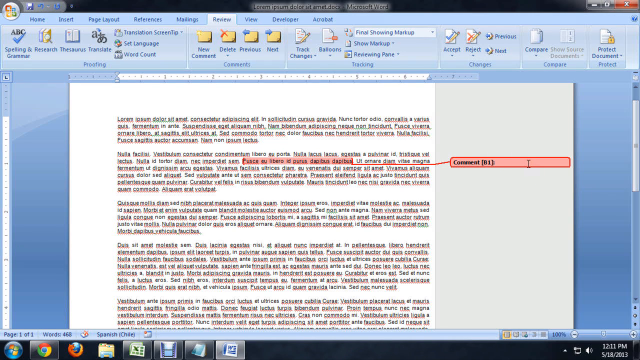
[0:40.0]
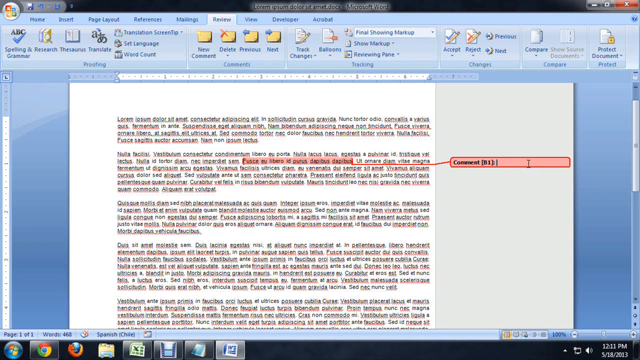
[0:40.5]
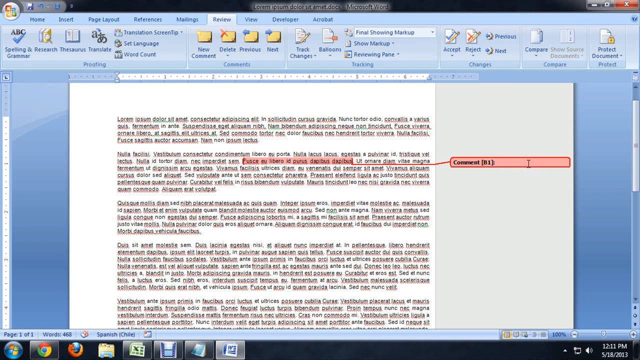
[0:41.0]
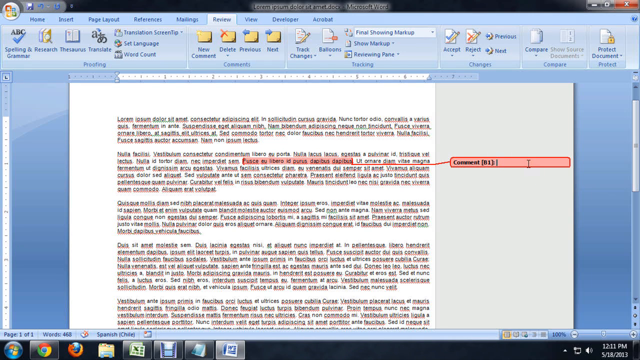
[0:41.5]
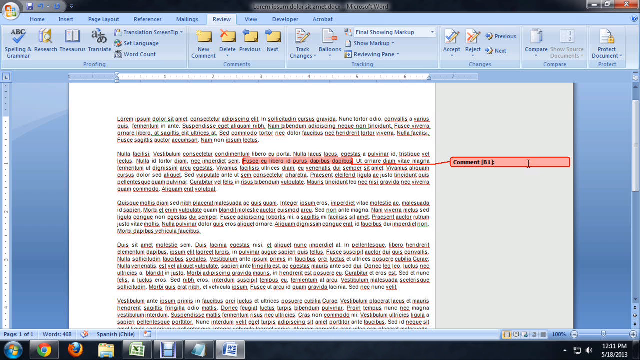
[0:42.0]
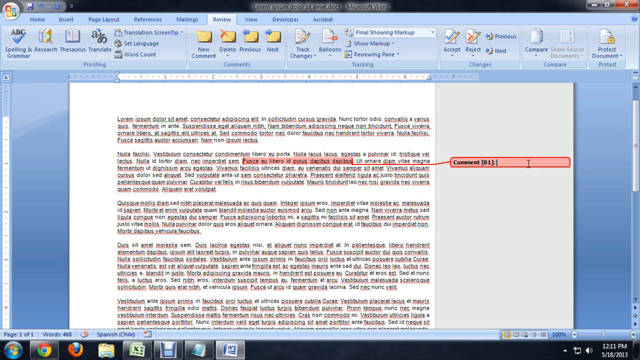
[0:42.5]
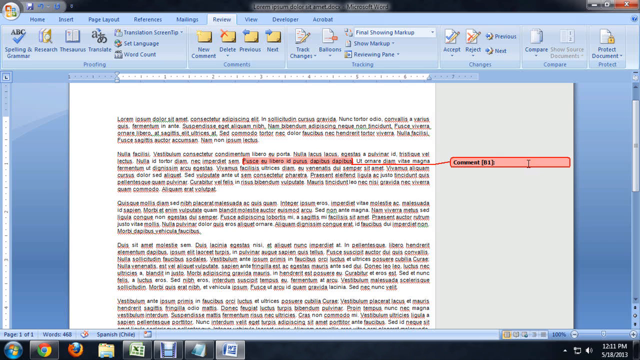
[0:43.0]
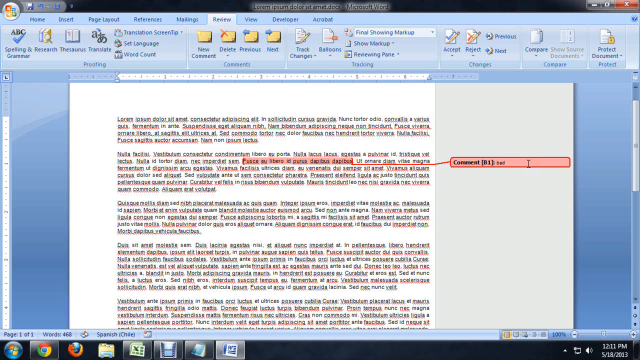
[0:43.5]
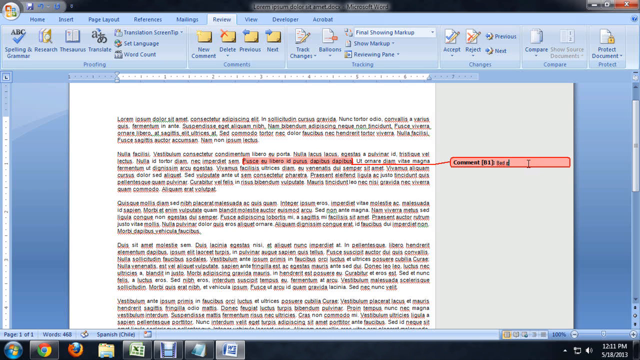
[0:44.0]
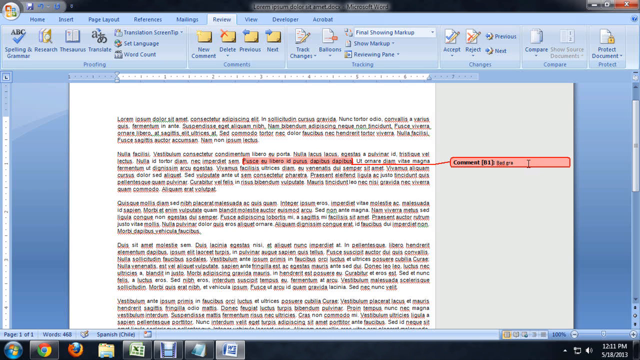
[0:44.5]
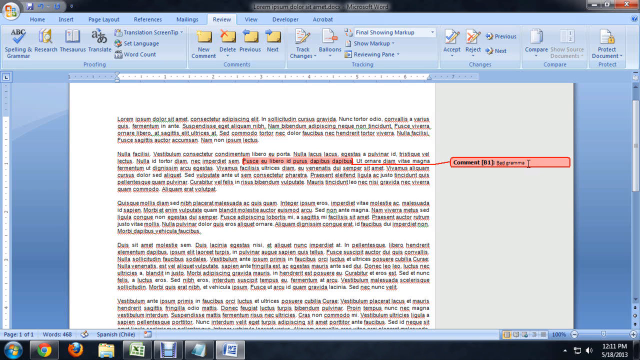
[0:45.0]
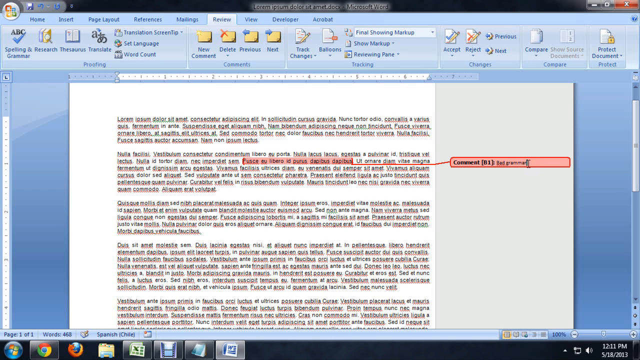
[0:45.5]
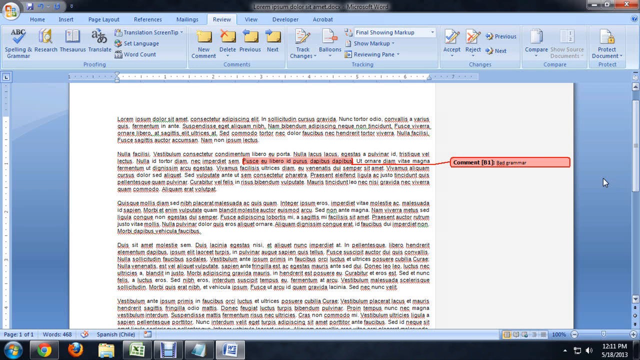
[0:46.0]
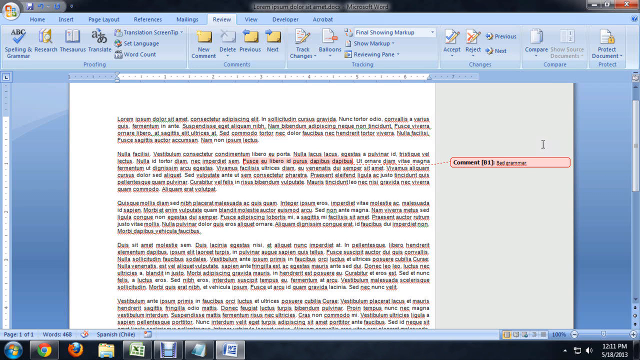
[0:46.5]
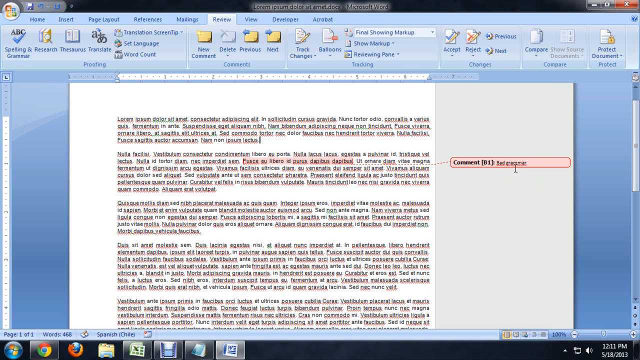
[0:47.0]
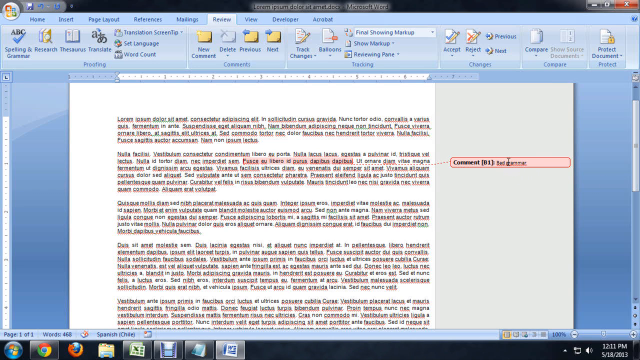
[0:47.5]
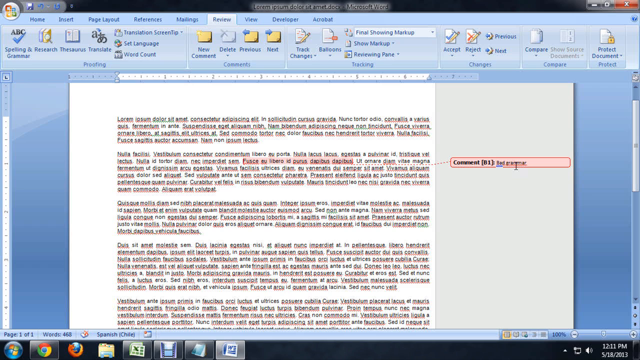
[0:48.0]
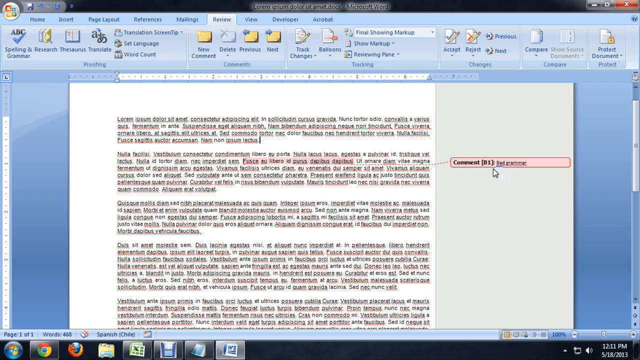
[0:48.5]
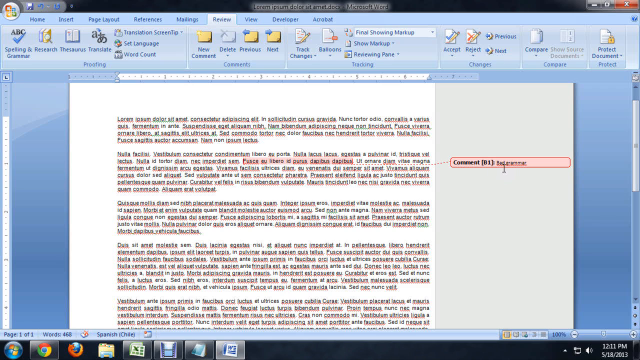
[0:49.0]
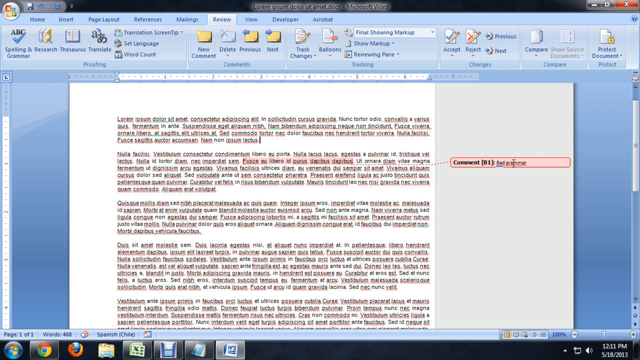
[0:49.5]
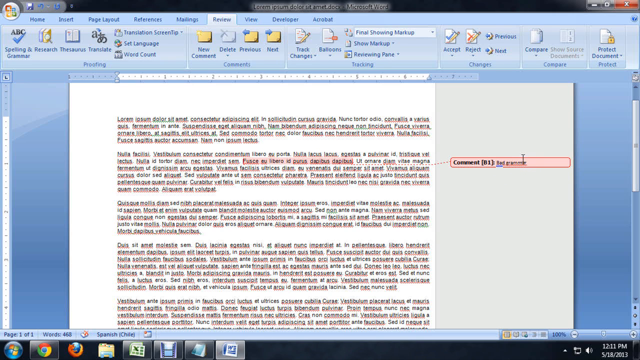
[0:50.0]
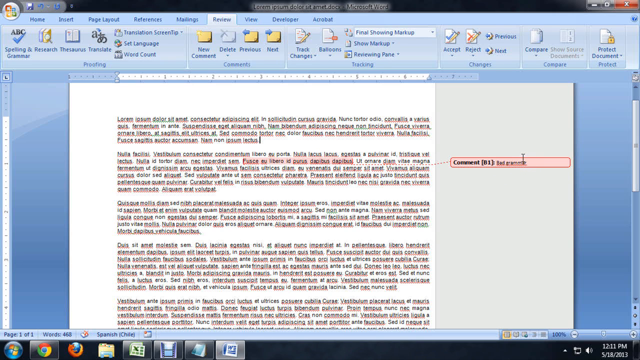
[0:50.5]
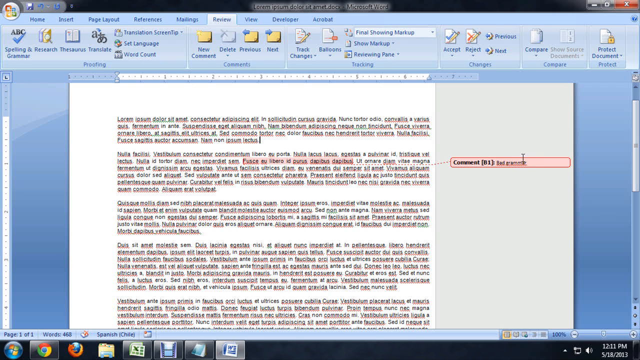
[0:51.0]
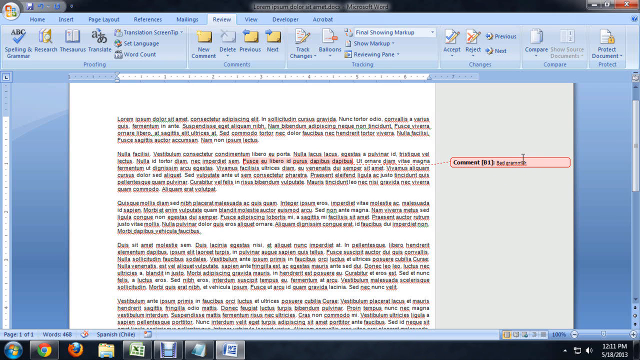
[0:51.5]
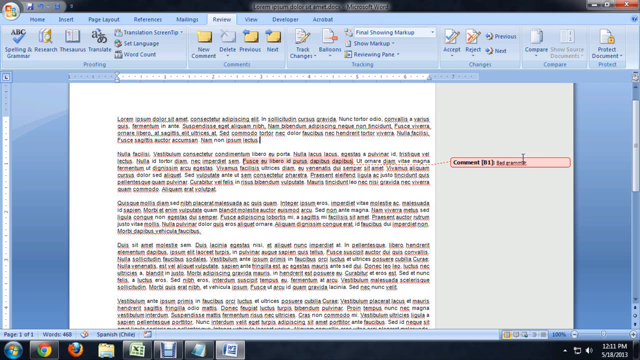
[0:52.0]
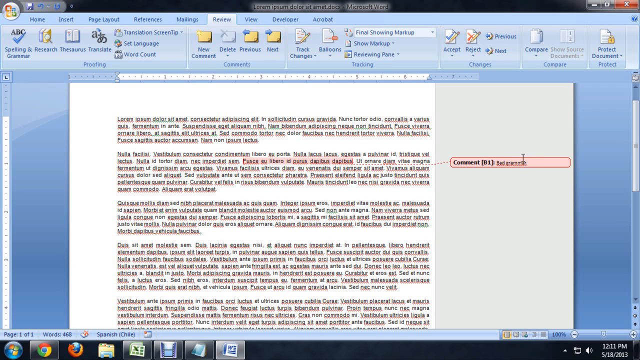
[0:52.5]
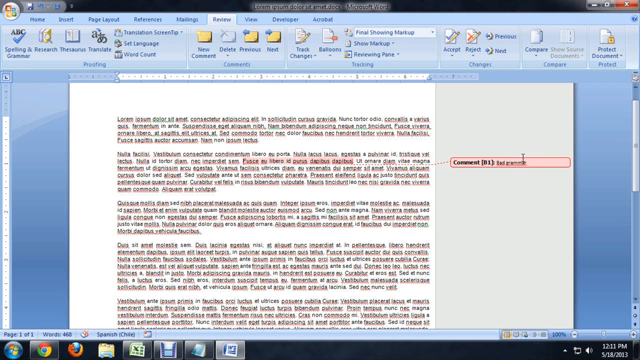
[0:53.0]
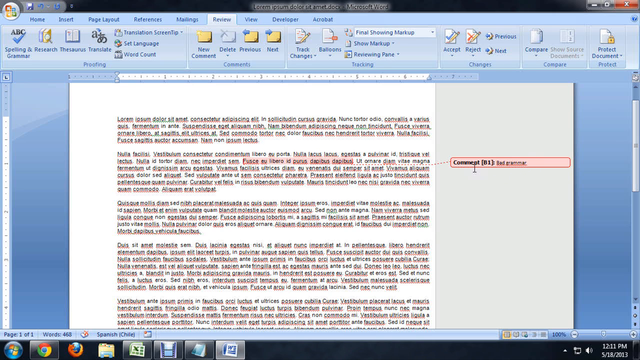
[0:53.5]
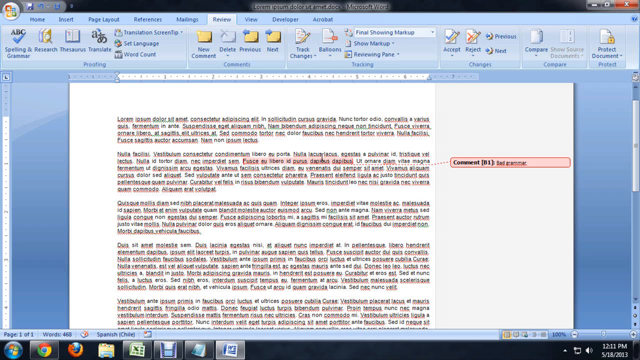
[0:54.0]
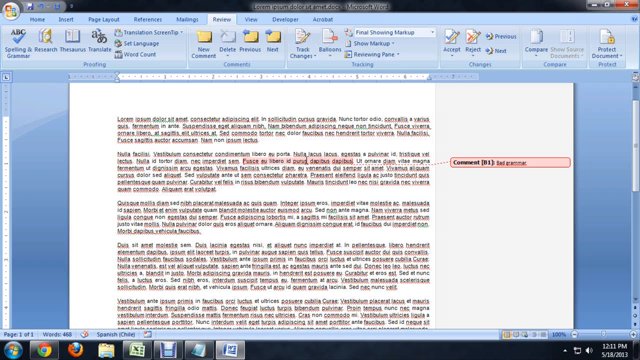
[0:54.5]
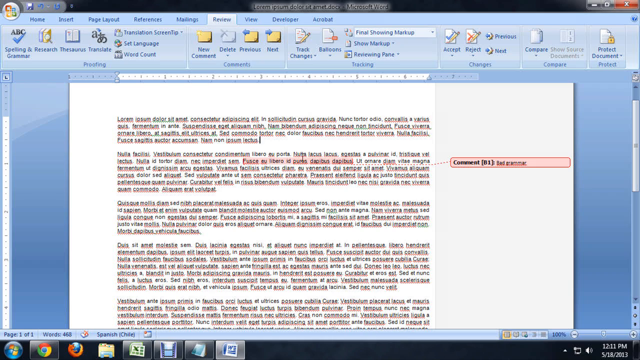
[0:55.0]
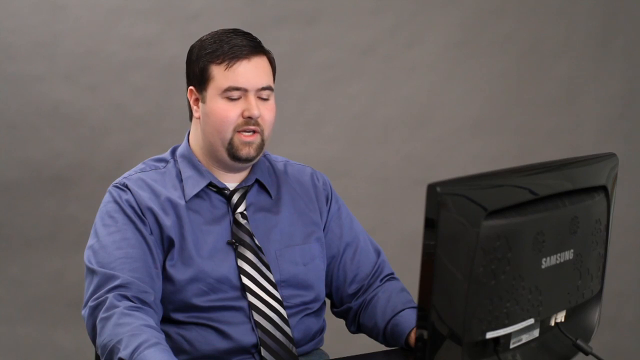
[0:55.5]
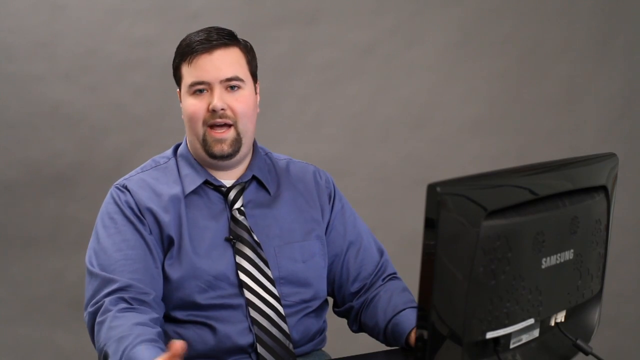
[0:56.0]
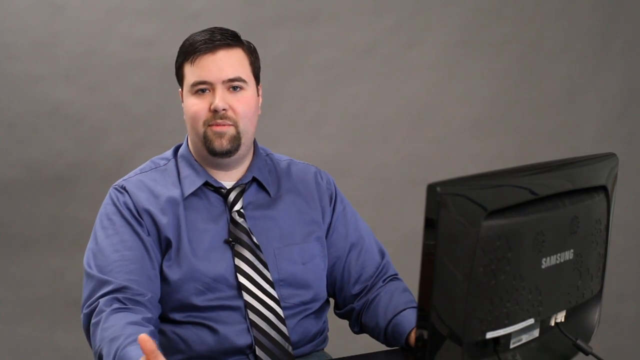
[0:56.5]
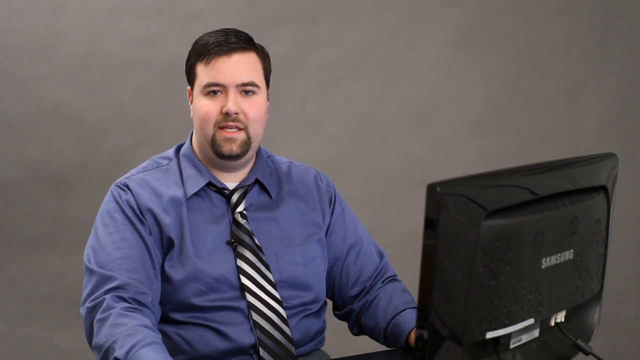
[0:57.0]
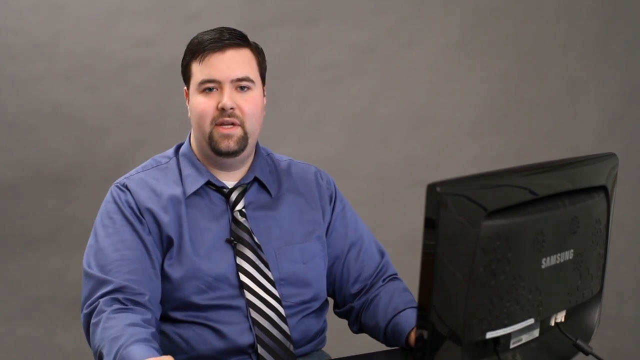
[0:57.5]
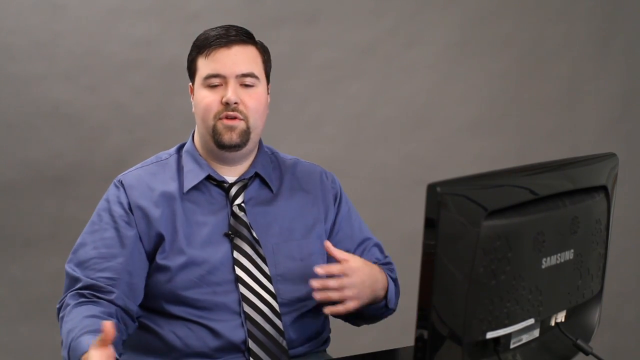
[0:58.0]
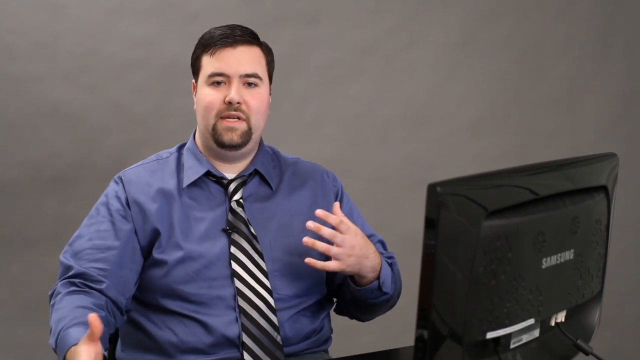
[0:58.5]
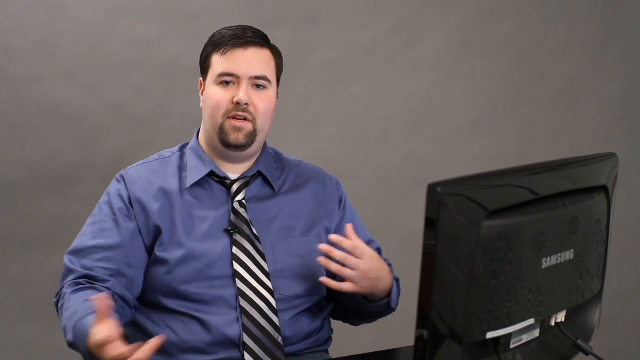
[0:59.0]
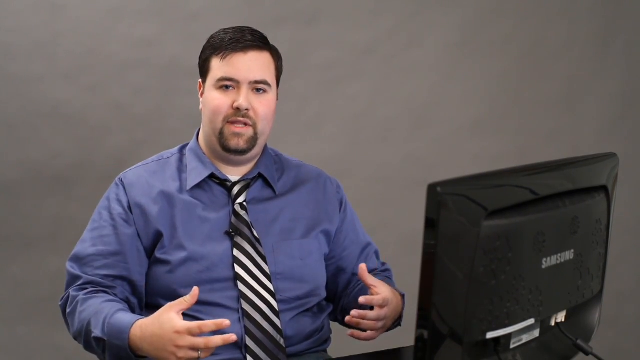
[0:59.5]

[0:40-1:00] He types into the rectangular comment input, apparently something to do with grammar, such as "bad grammar." He then goes back to the document and moves his mouse around where the highlighted phrase is. The video then pans back to him talking in front of the camera with a computer monitor in front of him, addressing the audience and this time using his hands as well.